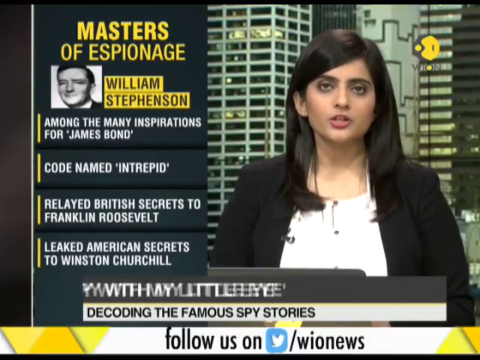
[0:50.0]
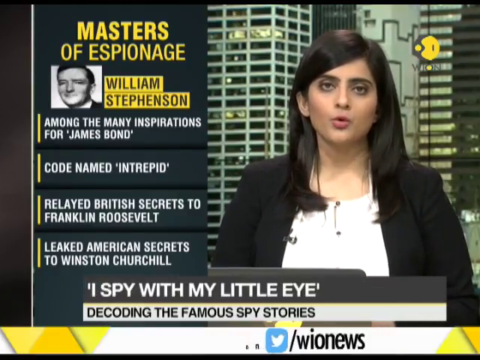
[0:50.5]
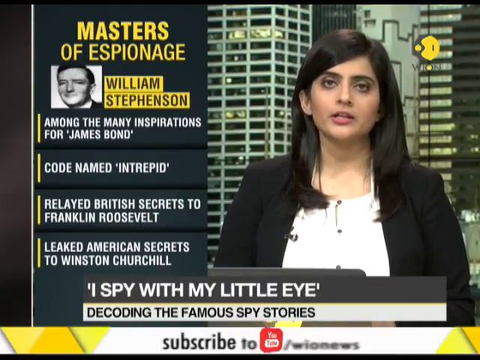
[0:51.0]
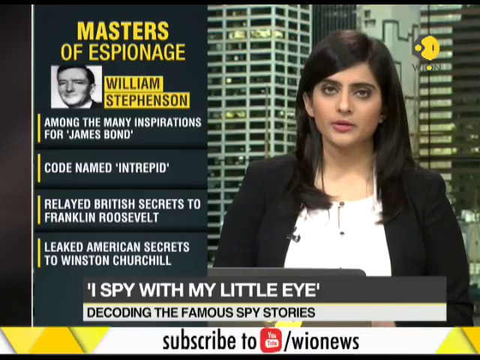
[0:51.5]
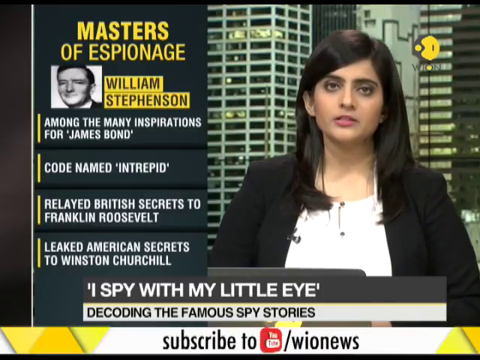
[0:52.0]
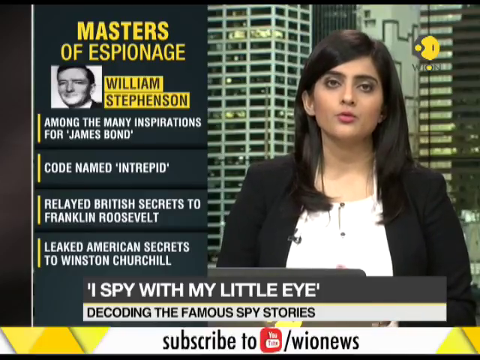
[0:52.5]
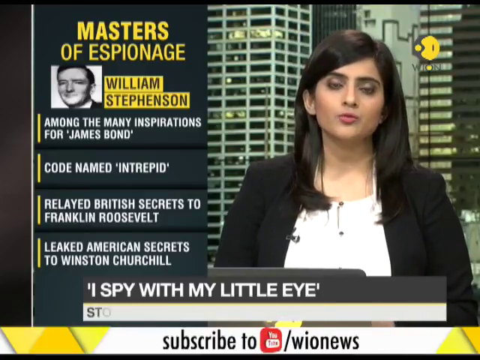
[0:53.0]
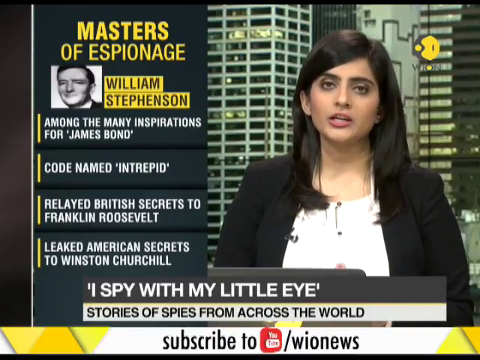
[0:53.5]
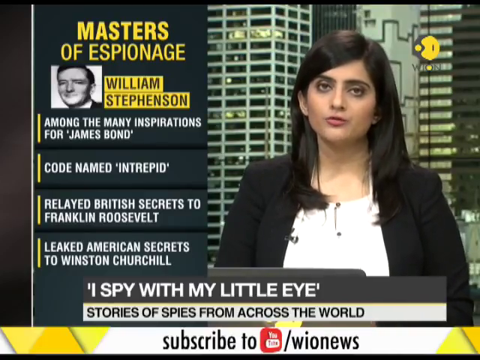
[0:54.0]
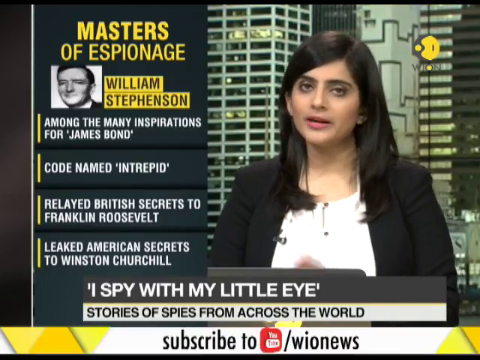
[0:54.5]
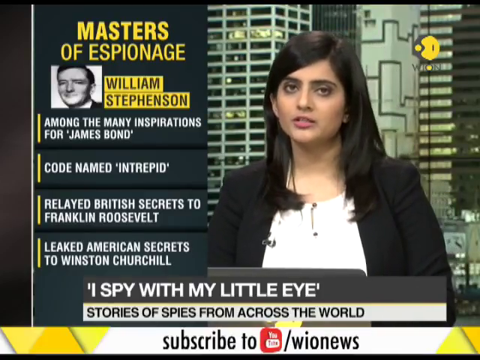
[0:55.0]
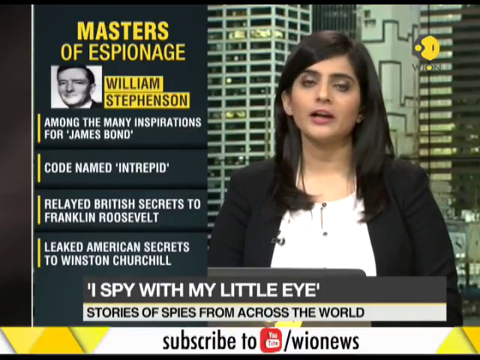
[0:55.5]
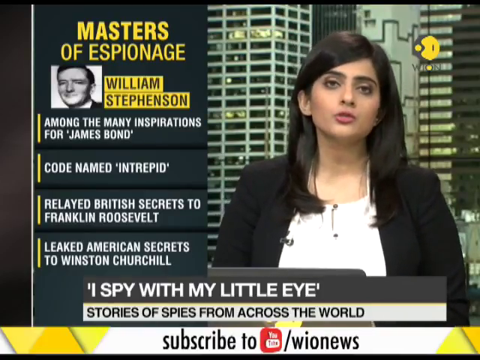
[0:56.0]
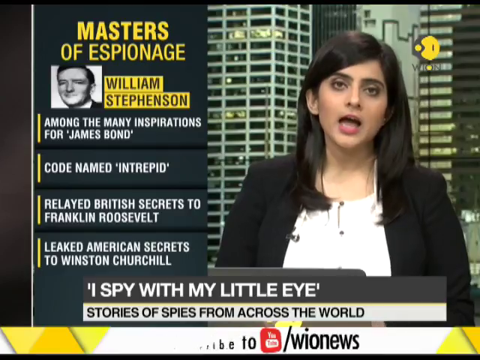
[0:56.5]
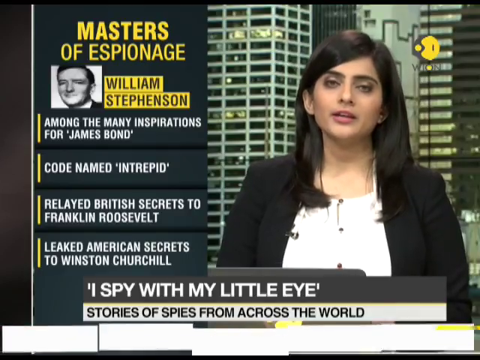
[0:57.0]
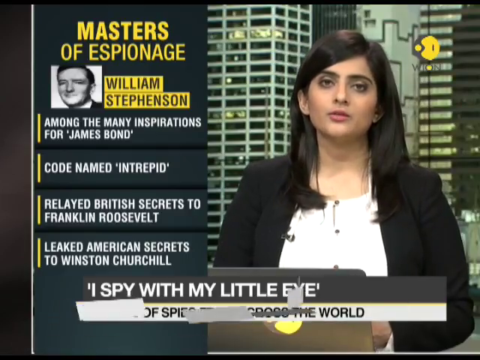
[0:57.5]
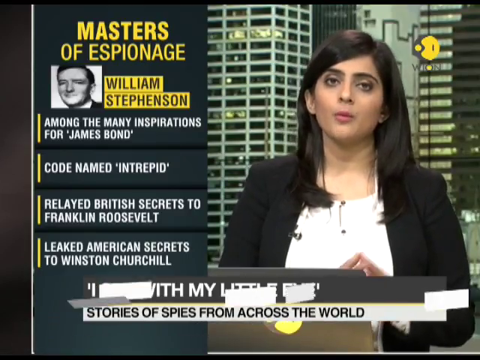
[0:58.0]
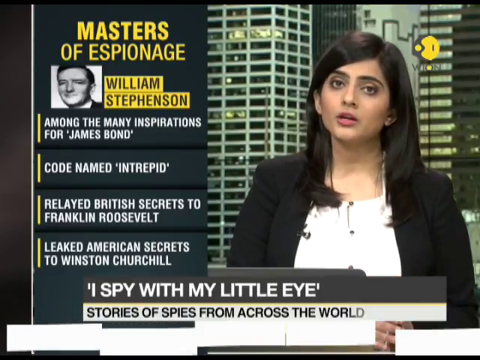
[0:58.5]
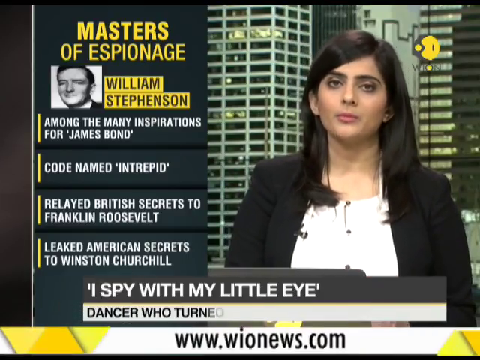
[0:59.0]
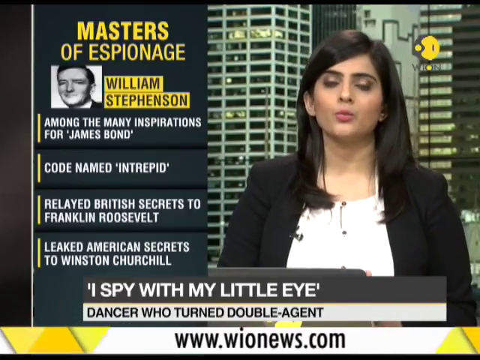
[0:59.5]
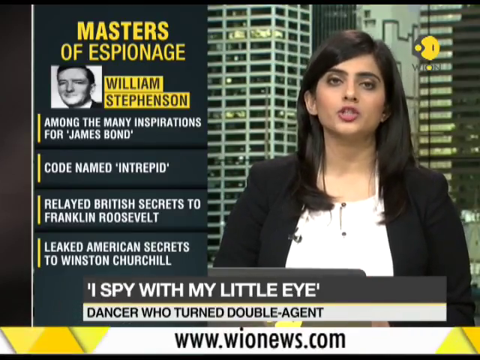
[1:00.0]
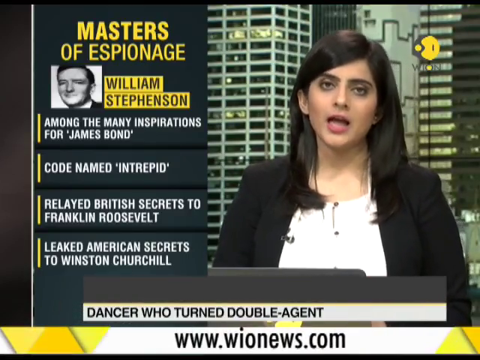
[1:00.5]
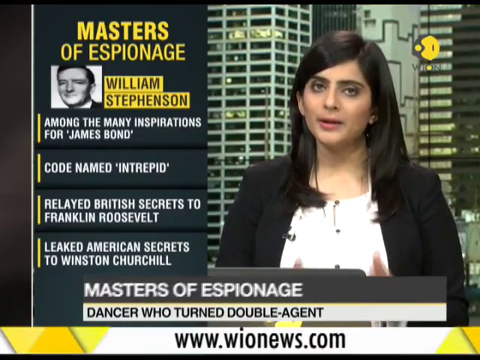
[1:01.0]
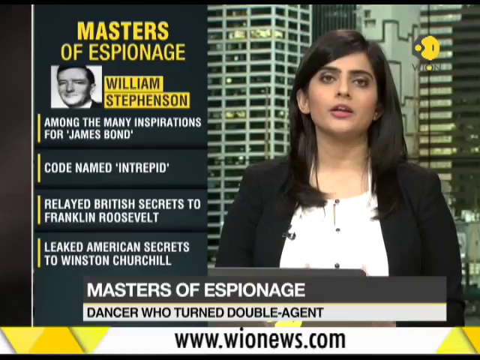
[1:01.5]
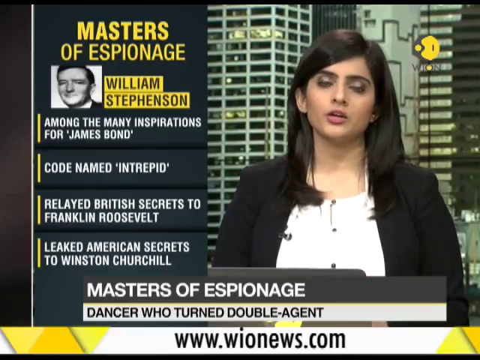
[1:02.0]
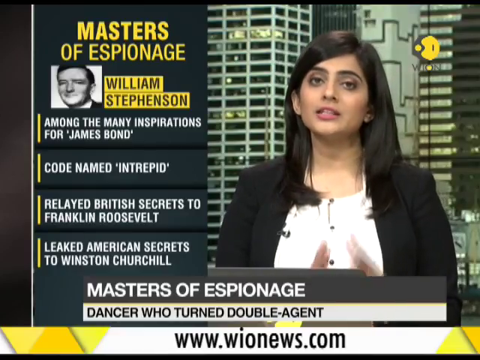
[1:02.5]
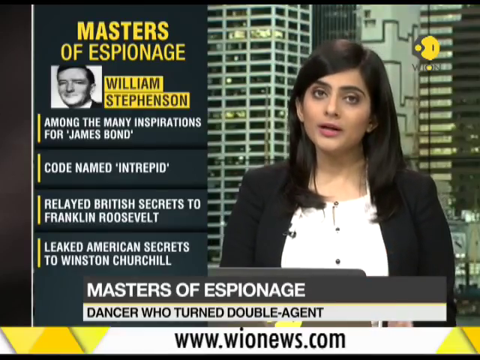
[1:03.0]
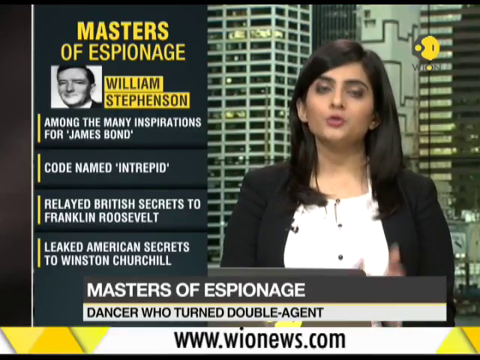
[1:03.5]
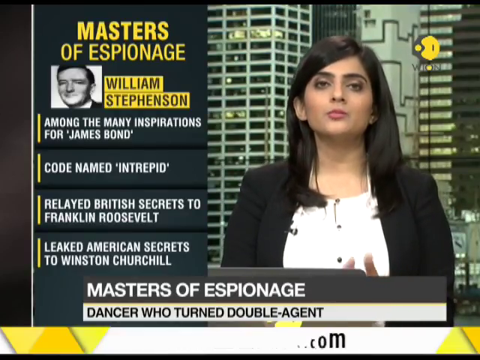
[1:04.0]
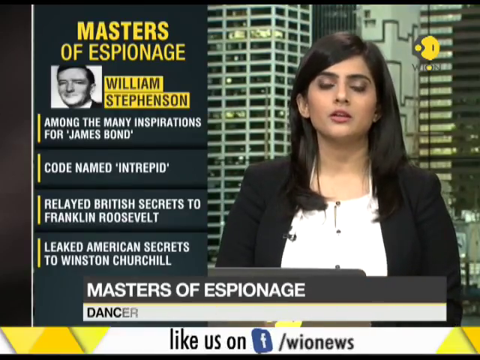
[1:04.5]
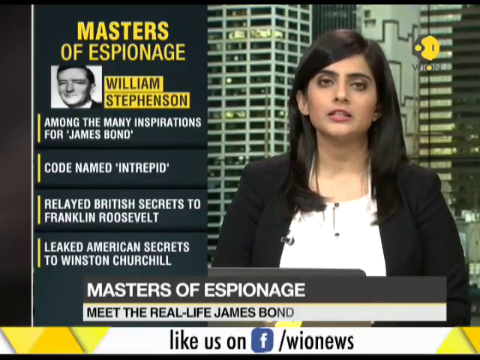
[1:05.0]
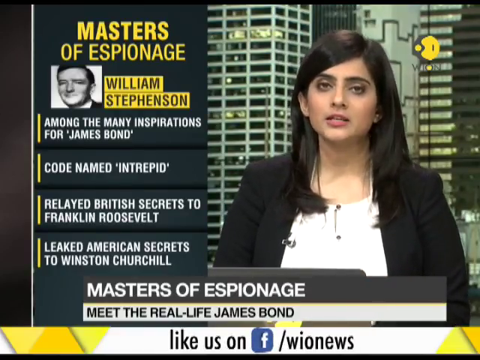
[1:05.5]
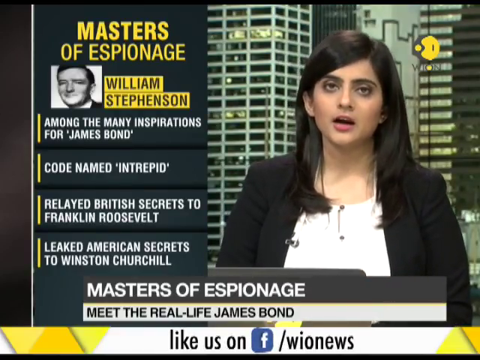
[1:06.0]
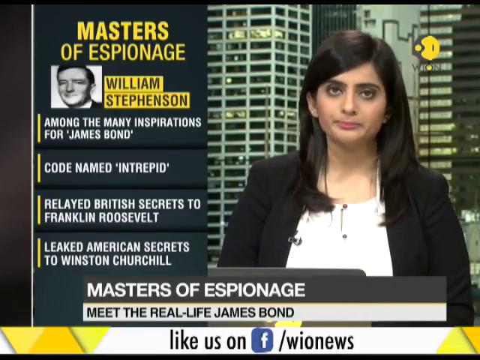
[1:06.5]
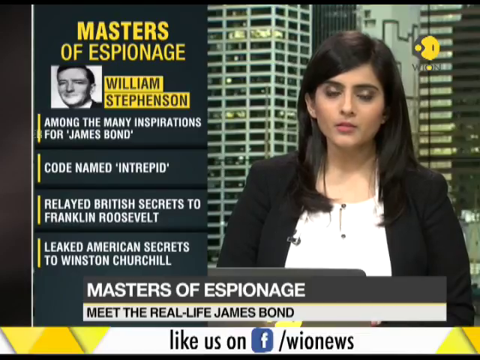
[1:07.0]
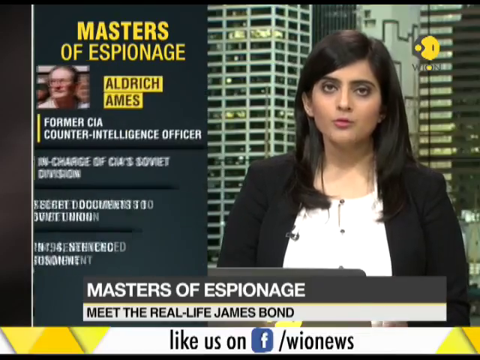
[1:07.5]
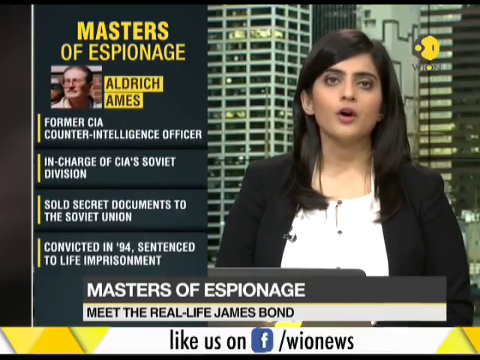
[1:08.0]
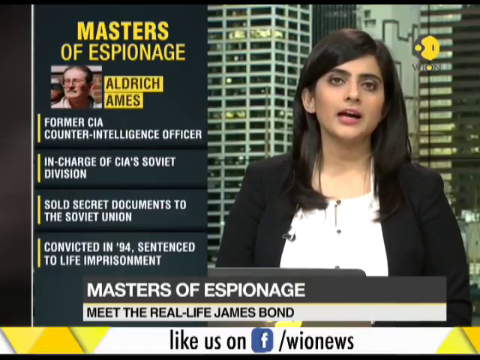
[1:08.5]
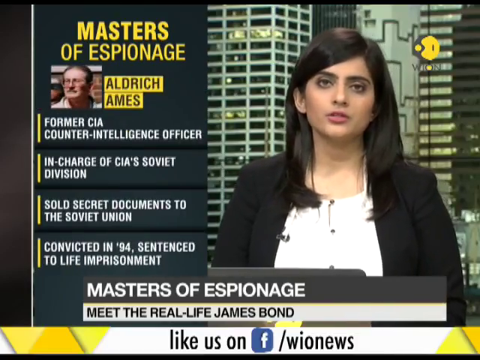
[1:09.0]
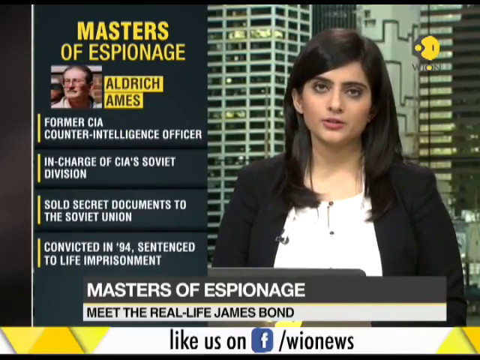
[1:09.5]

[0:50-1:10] A woman with long brown hair wears a black suit jacket with a small microphone clipped to it, with a picture of a large city behind her. Labels at the bottom of the screen read "I spy with my little eye" and, below, "Decoding the famous spy stories." An addition on the side reads "Masters of espionage" at the top, with a picture of a man named "William Stevenson" and various facts listed below. Her hands move slightly as she talks. The bottom labels then change to "Masters of espionage" and "Dancer who turned double agent."